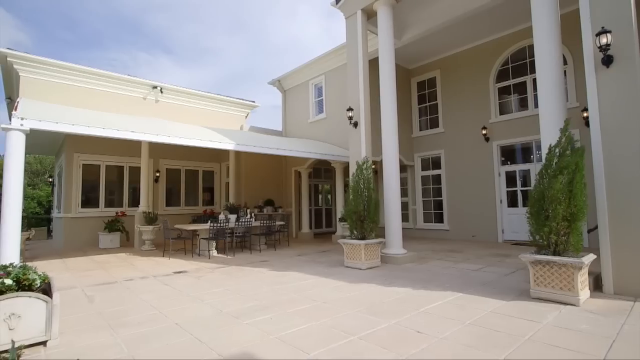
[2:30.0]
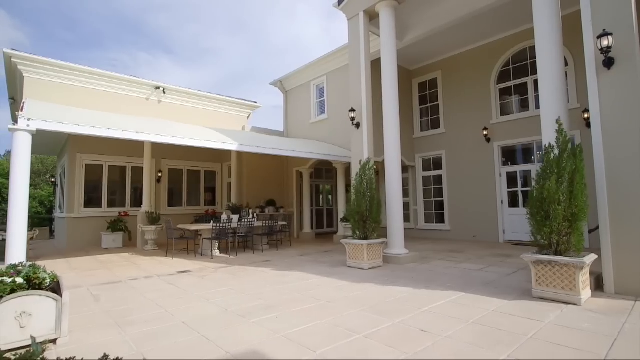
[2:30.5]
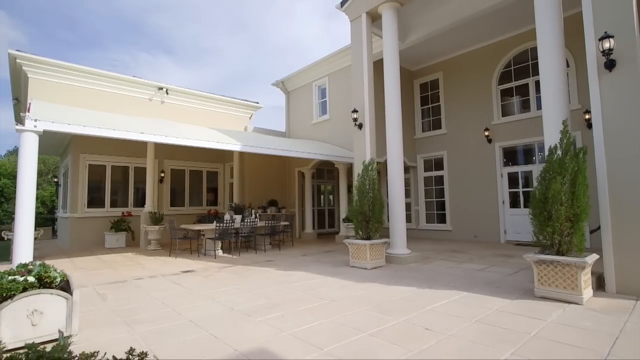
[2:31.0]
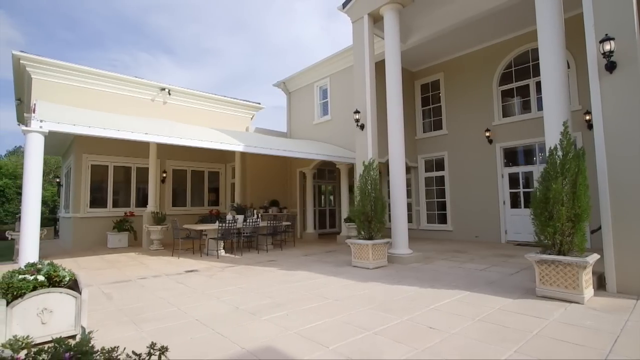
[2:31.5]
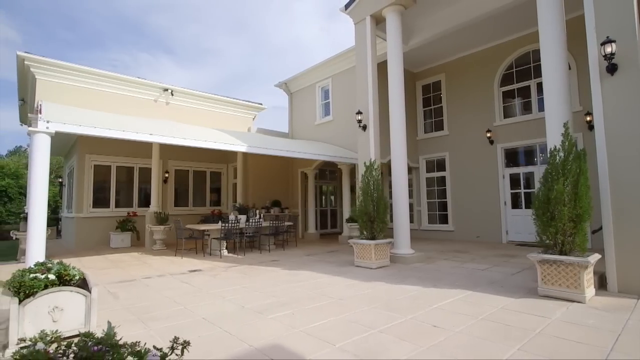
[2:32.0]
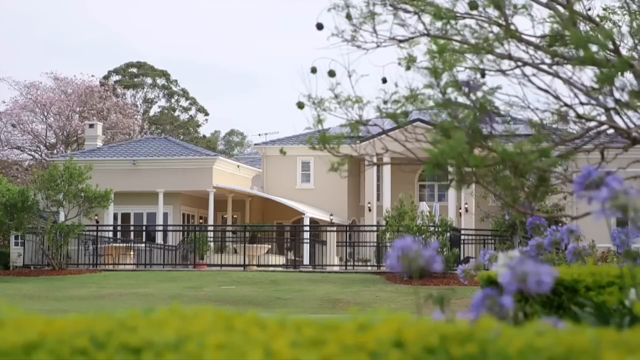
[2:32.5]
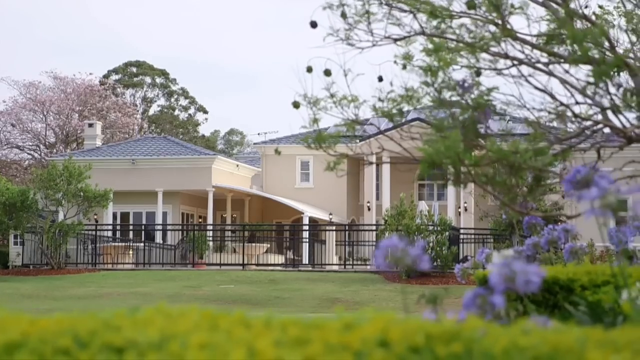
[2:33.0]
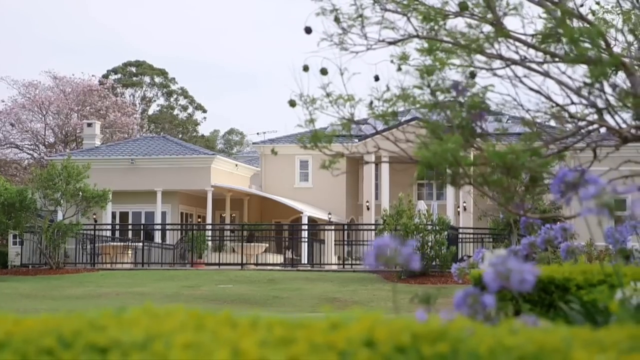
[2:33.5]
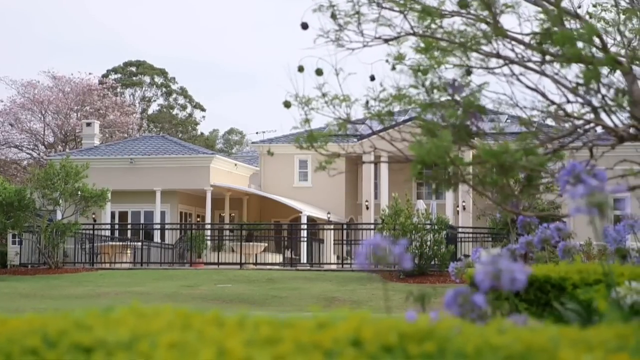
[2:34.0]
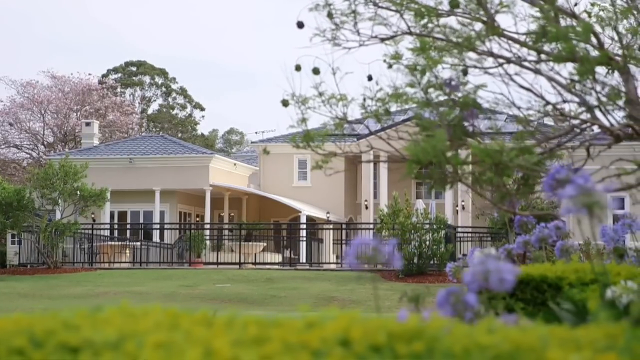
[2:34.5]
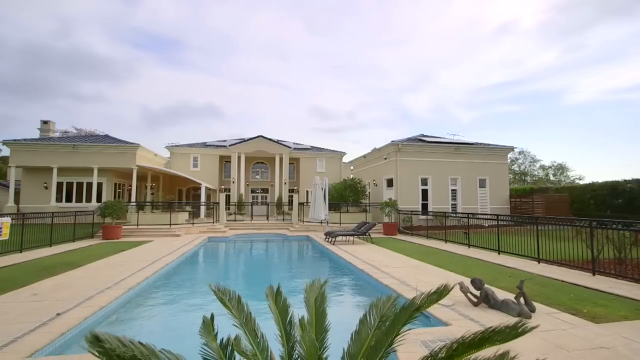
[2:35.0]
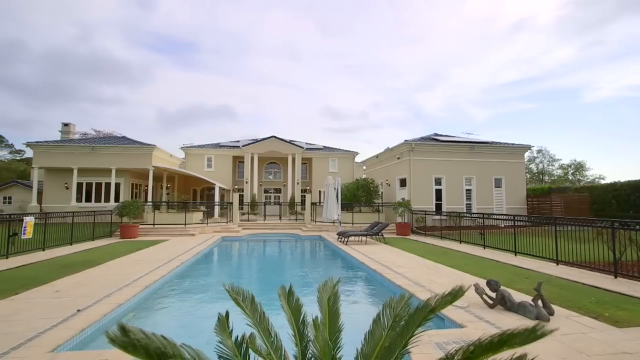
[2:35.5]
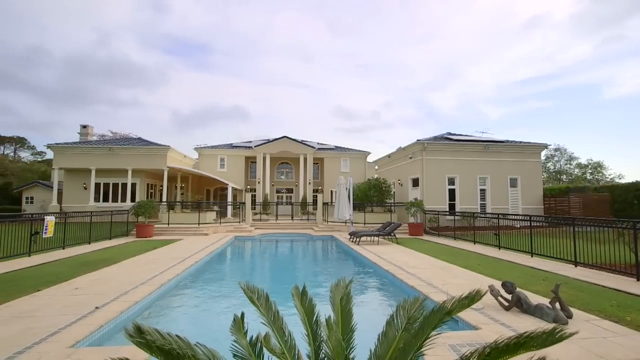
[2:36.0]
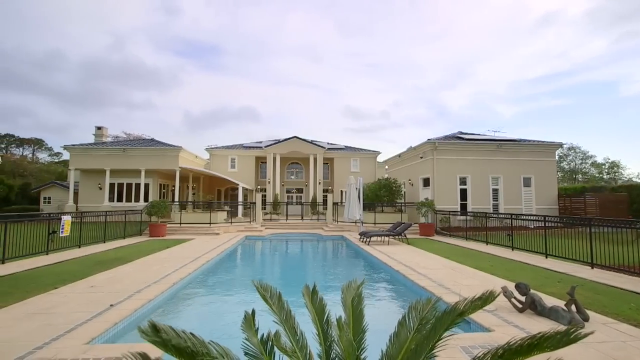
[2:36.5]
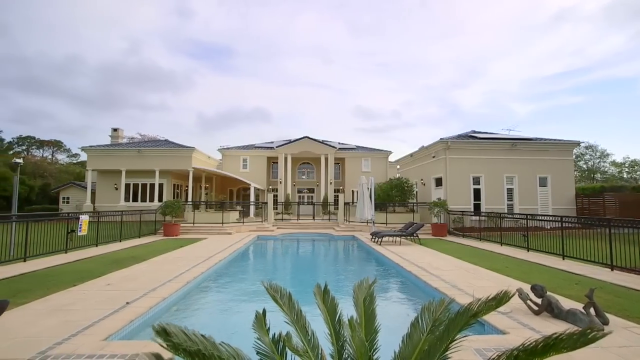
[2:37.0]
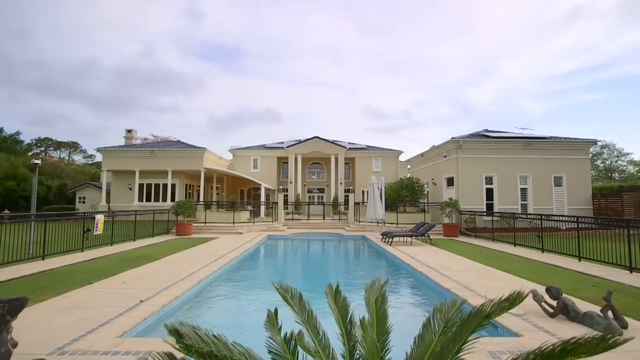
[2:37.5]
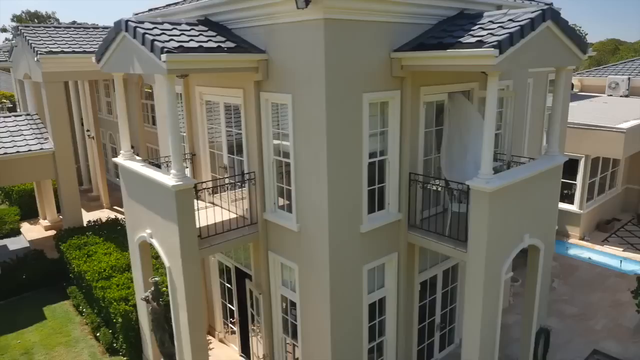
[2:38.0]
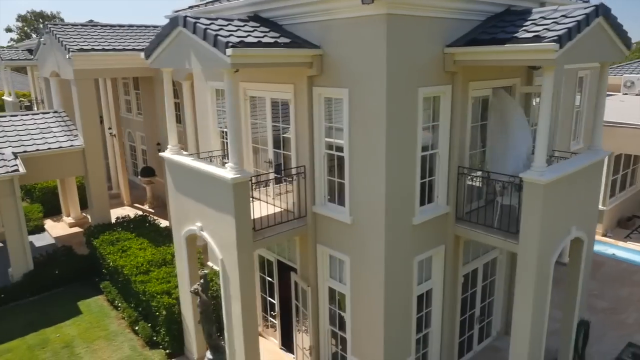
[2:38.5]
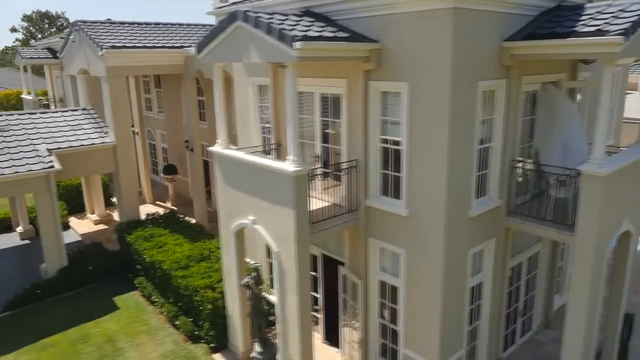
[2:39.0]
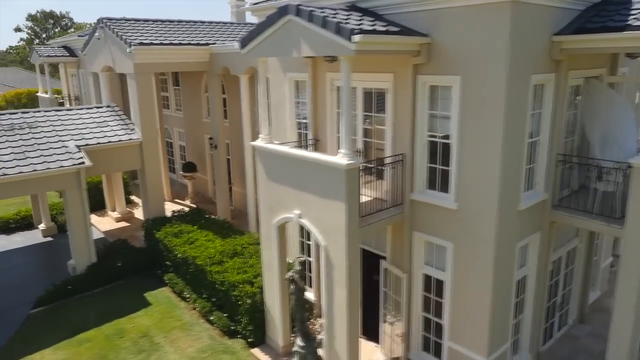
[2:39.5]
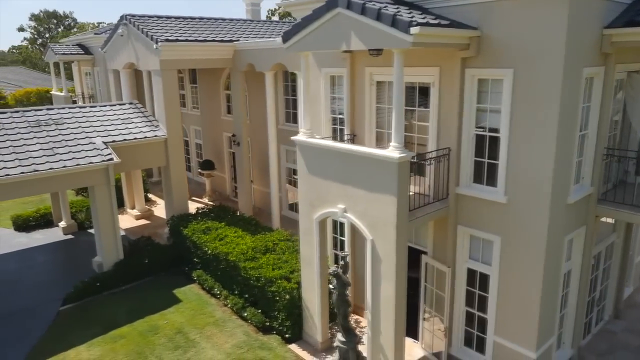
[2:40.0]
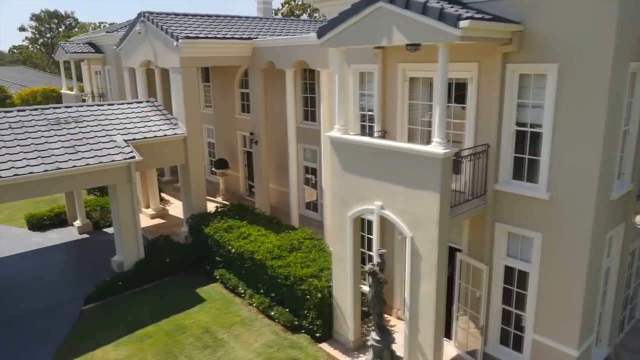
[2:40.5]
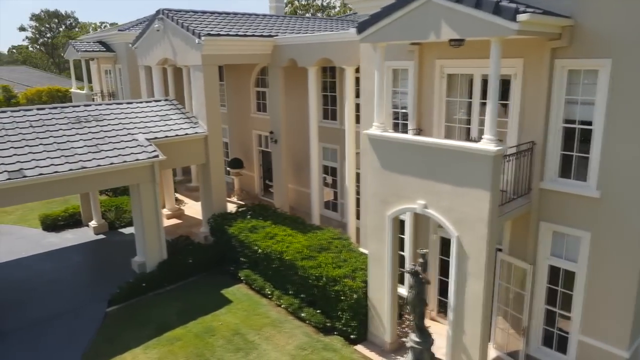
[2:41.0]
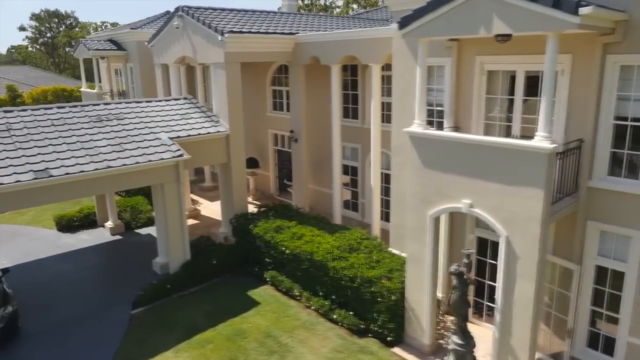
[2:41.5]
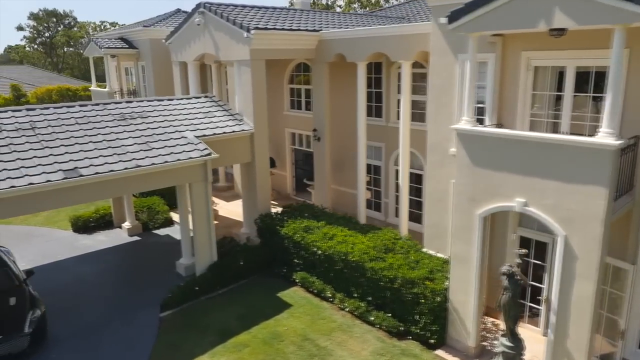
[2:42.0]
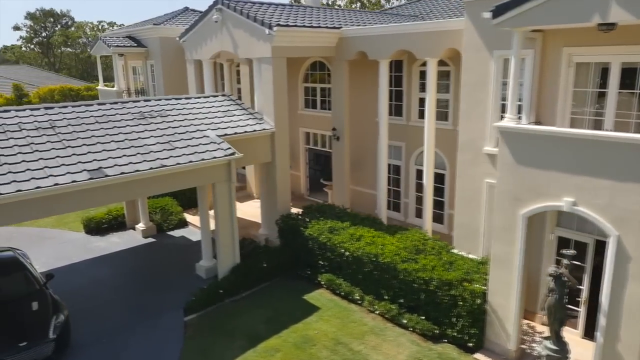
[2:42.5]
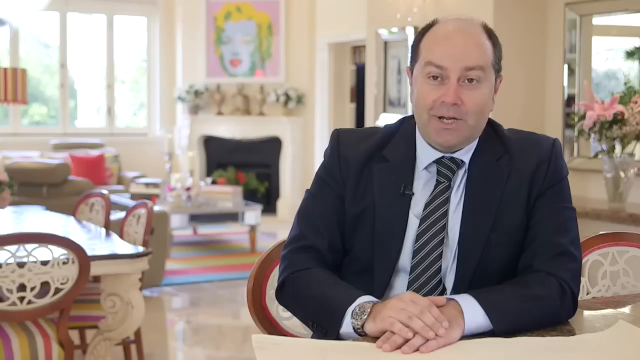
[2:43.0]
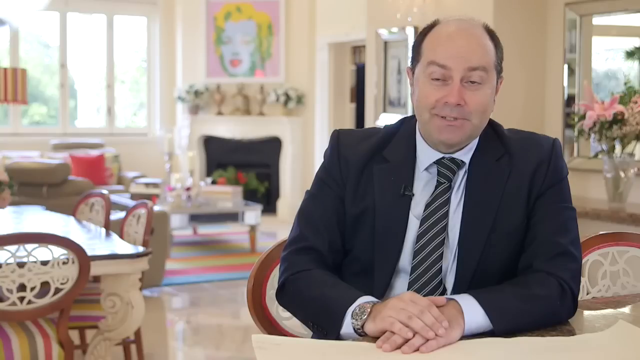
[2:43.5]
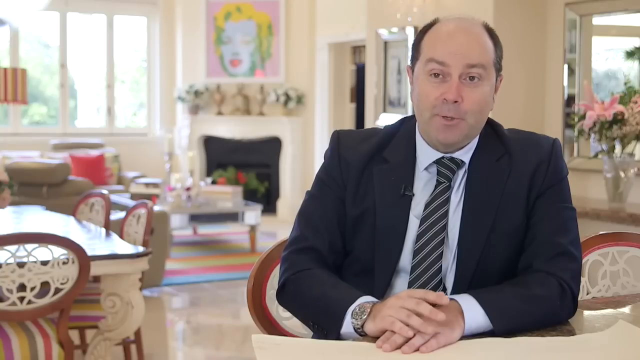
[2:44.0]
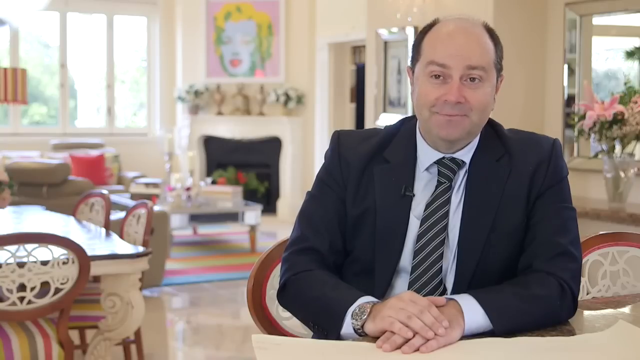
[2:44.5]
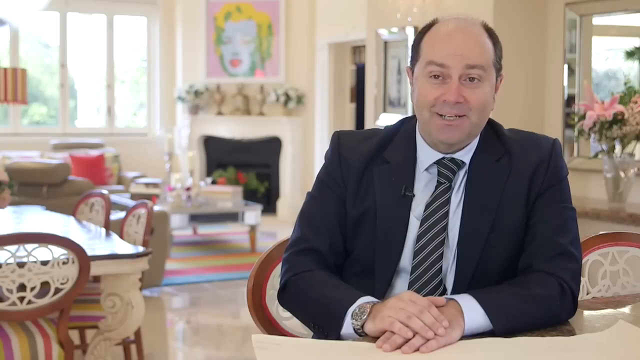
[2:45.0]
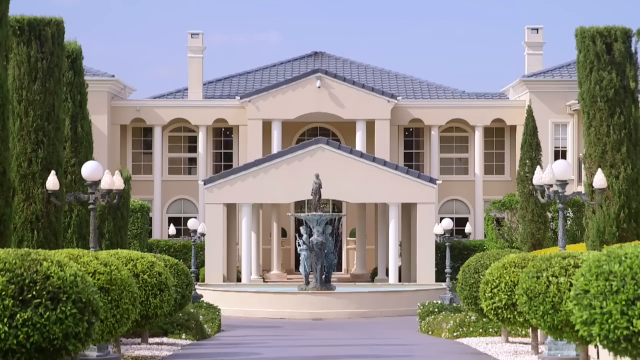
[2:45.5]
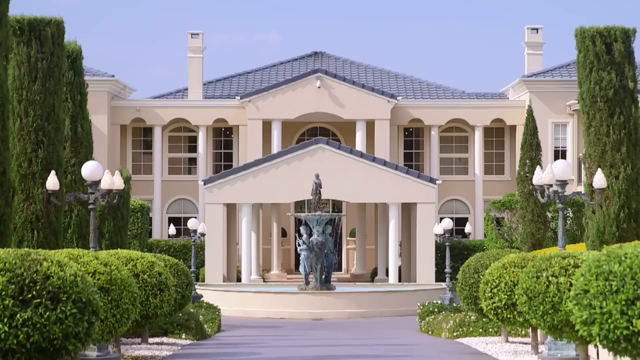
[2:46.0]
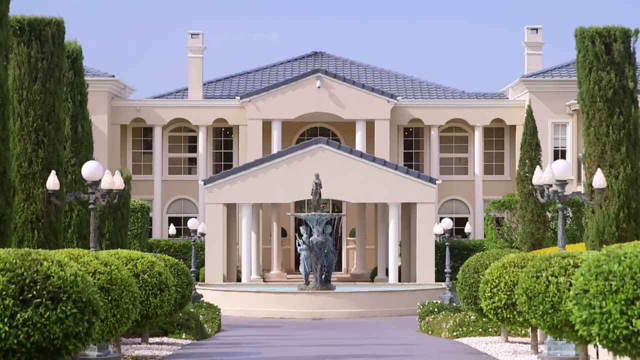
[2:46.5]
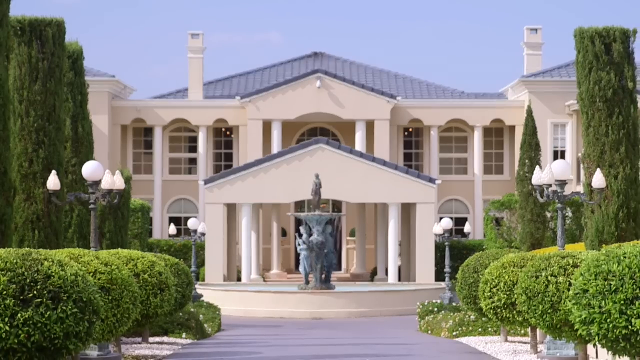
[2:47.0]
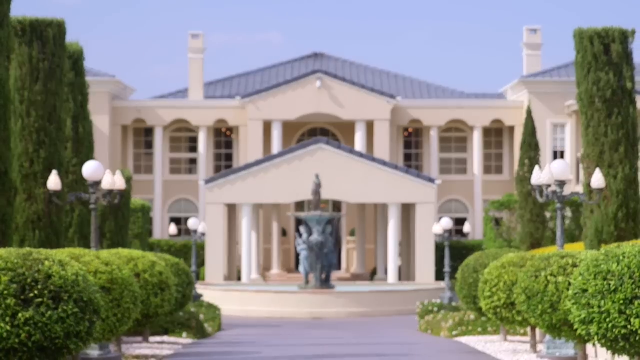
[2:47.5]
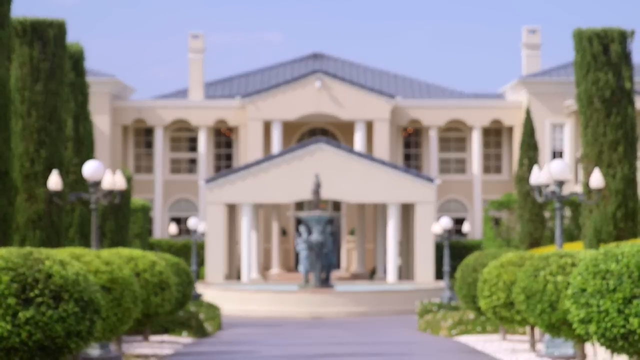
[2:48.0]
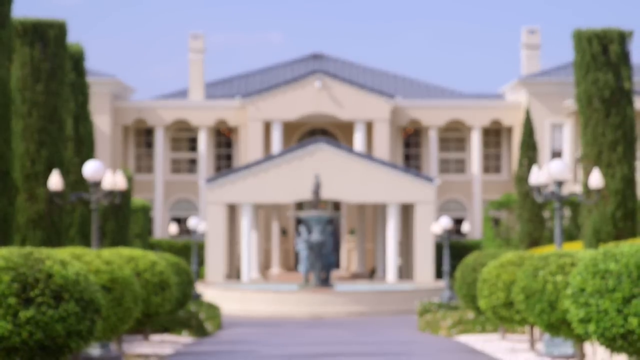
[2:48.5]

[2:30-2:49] The house is filmed from an elevated angle at about the height of the house. The video moves around the house and shows the roof, covered in black concrete tiles. There seems to be a shed or space for a car, with a car parked under it. Then an old man in a black blazer and black tie is shown smiling and speaking inside the sitting room or one of the rooms that has many tables with chairs around them. As the man speaks, the outside of the house is shown again: it has two floors, what look like chimneys, and three windows on each side of the second floor. The trimmed garden is shown partially as the view centers on the house. In front of the house is a statue that is also a fountain, with a little pond into which the fountain water flows.